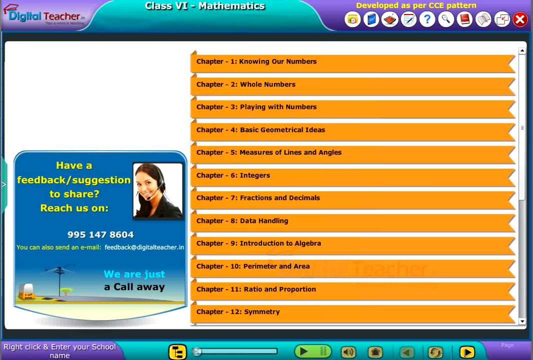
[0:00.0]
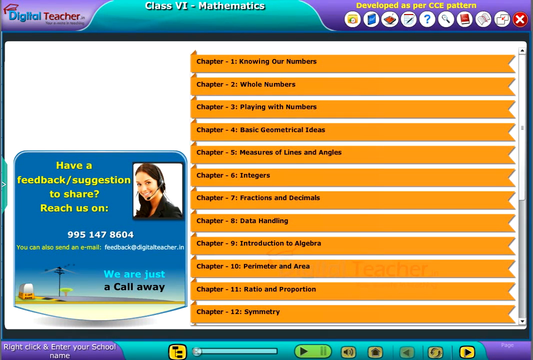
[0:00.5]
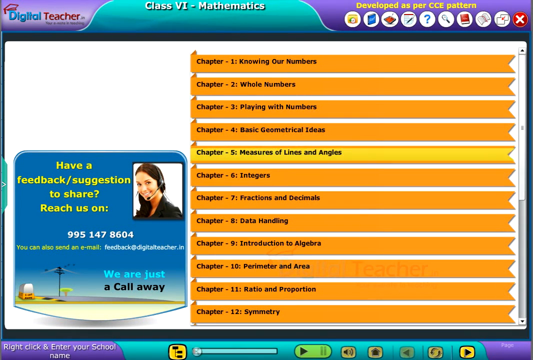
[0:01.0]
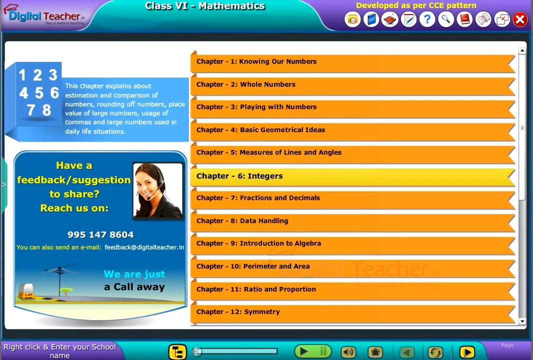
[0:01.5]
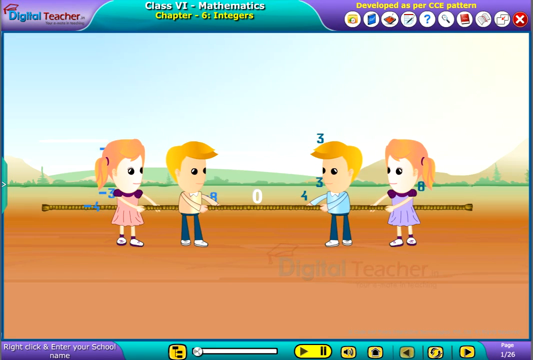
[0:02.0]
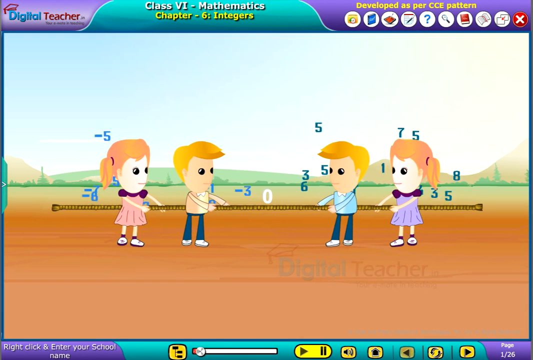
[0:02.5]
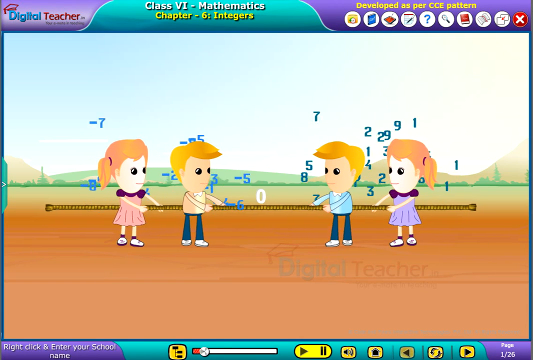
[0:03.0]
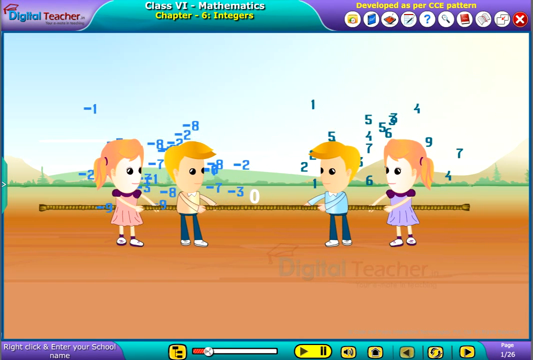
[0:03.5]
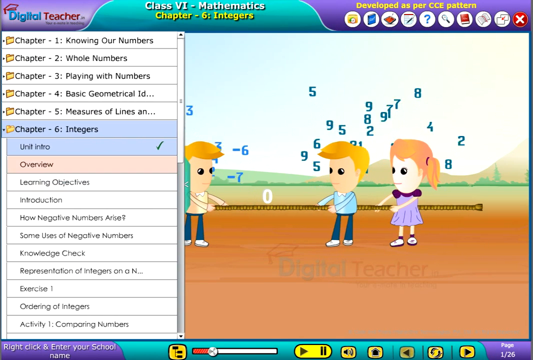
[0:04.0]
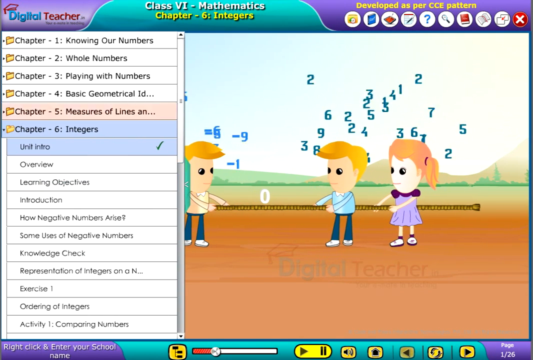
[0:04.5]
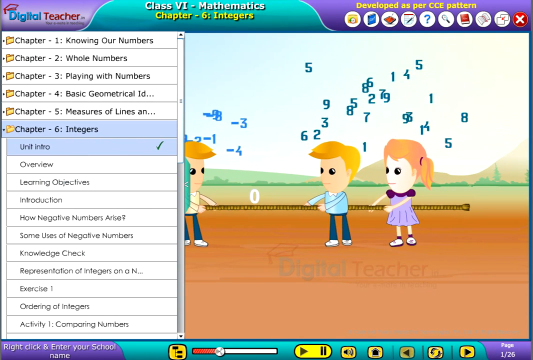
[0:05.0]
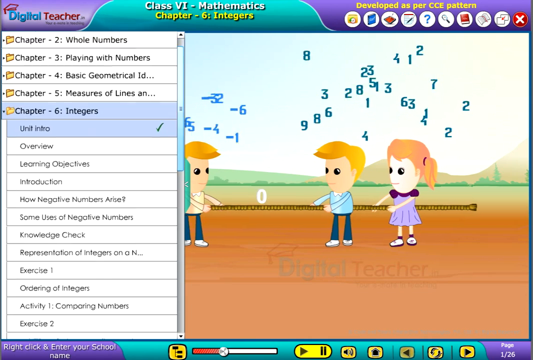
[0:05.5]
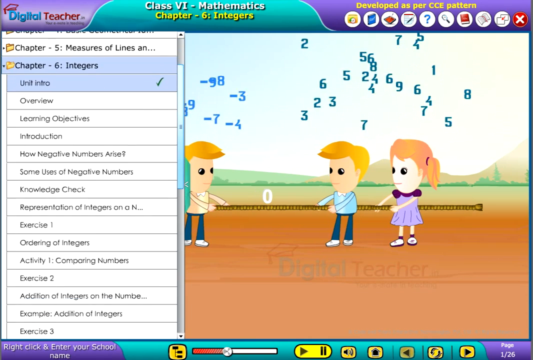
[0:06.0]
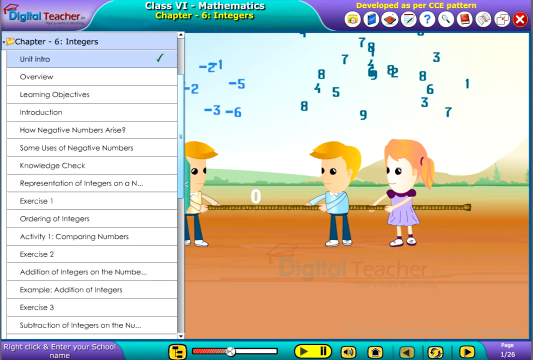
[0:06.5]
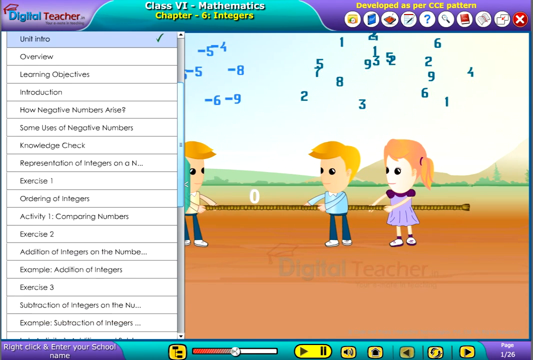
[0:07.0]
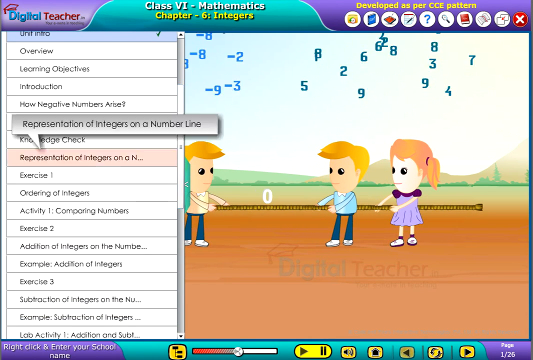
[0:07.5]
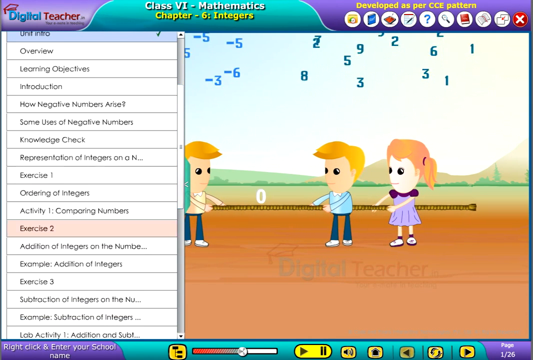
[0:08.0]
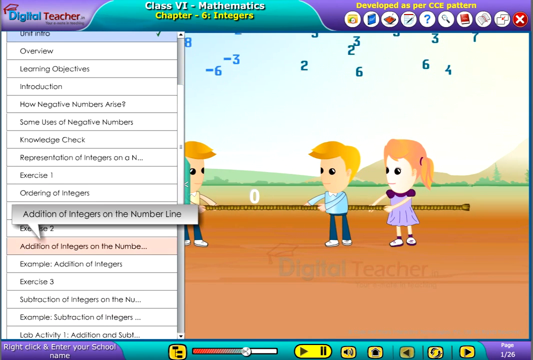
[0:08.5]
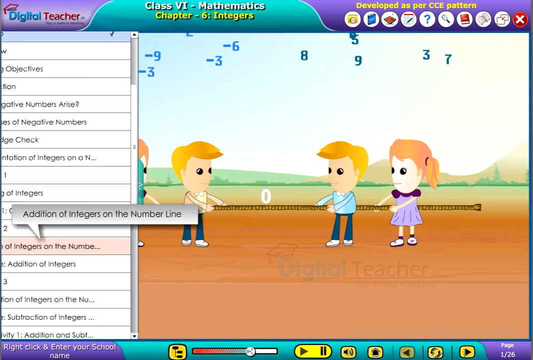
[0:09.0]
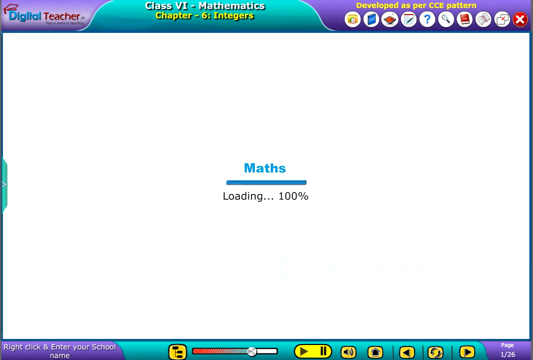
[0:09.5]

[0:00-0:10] The video opens on a website, application or some sort of software about maths. At the bottom left is a blue feedback panel with the title "have a feedback / suggestion to share", a phone number, the email "feedback@digitalteacher.in" and the slogan "we are just a call away", along with a picture of a woman with long brown hair who seems to be wearing a customer agent headset. Across the top is a navigation banner. At the top left is a Digital Teacher logo, with "digital" in blue and "teacher" in red, and the word "digital" wearing a red graduation cap. Right next to the logo is a tab-like heading that says "class 6 mathematics", and to the right of this tab are different buttons like icons, above which yellow writing says "developed as per CCE pattern". To the right of the feedback panel is a long list of chapters with long, wide, bookmark-type headings, orange with black writing, running from chapters 1 to 12. The cursor hovers over chapters 5 and 6, and the area above the feedback panel dynamically updates with information about each chapter. Chapter 6, Integers, is clicked, and an animation plays of two boys and two girls playing tug of war, with negative and positive numbers flying up above them. On the left, a panel opens like a side navigation bar with the chapter 6 integers folder open, showing multiple pages that can be selected. The list is scrolled down and a page called "addition of integers on the number line" is selected, with a speech bubble hovering over it to reveal the full title.